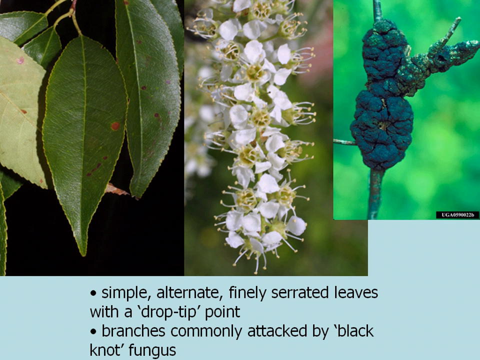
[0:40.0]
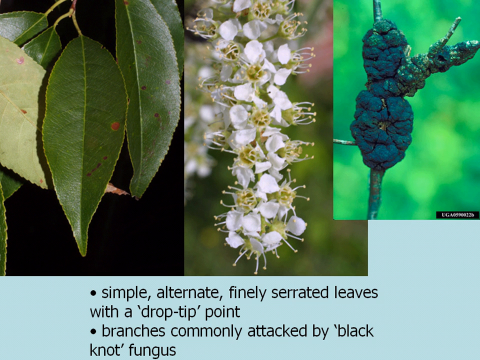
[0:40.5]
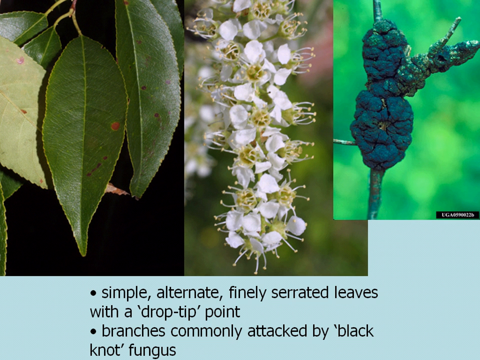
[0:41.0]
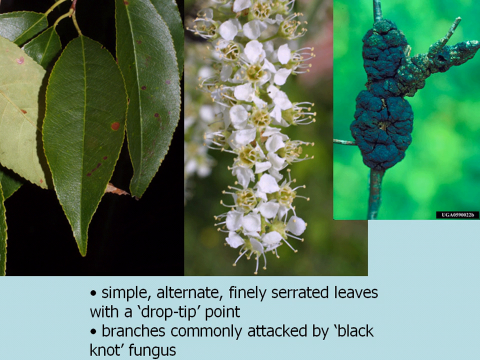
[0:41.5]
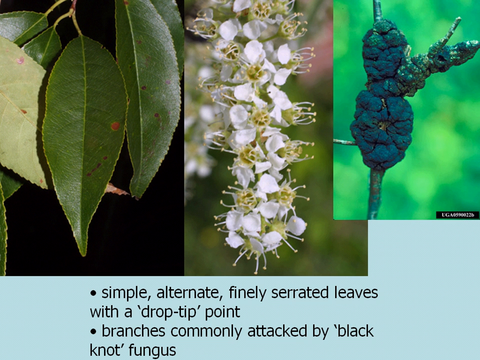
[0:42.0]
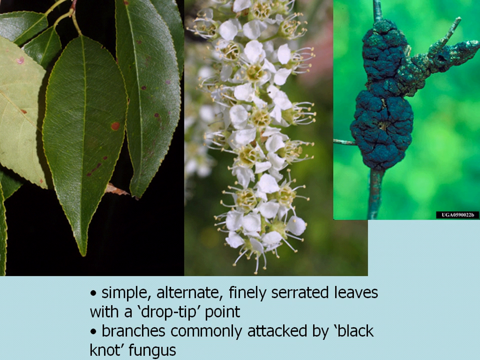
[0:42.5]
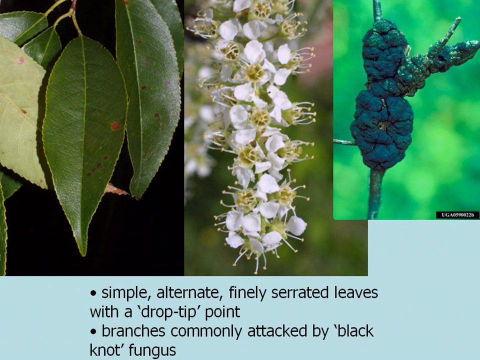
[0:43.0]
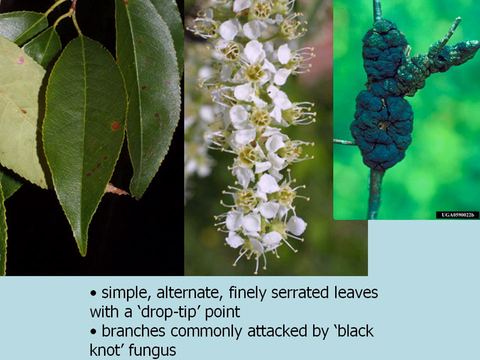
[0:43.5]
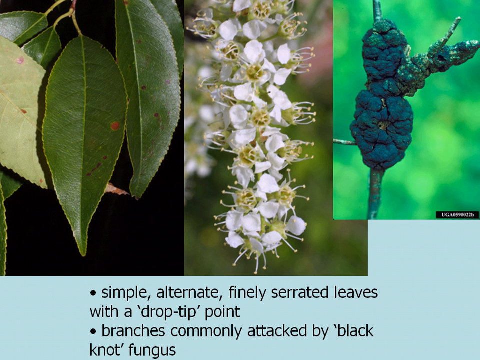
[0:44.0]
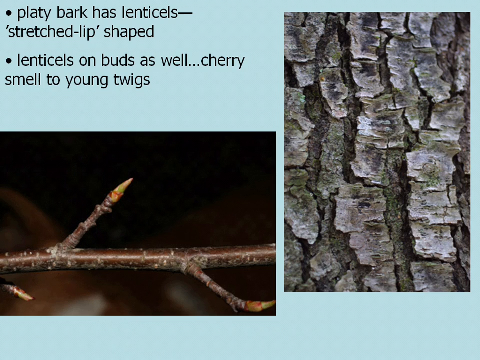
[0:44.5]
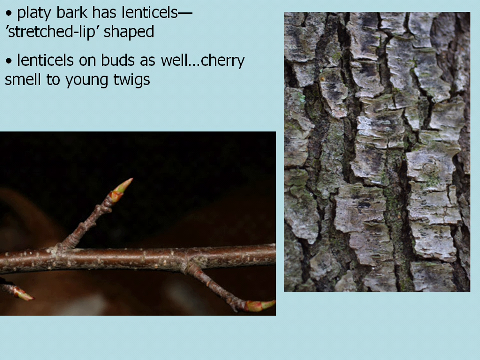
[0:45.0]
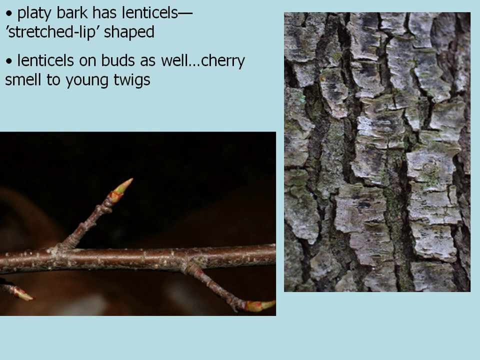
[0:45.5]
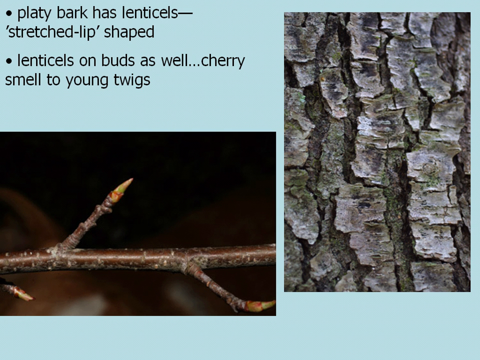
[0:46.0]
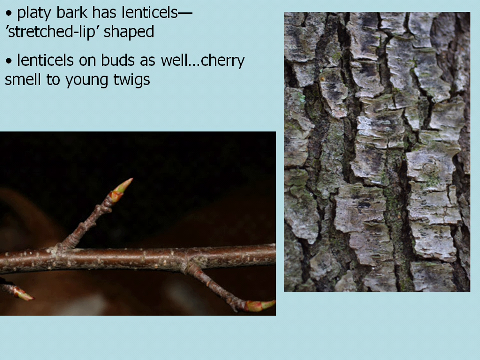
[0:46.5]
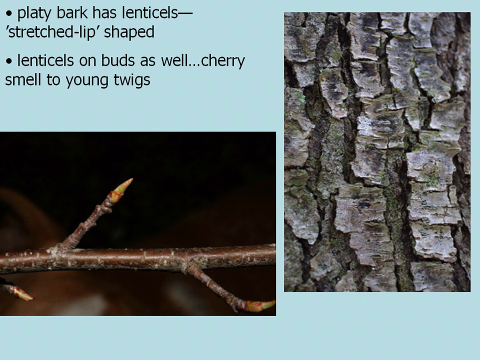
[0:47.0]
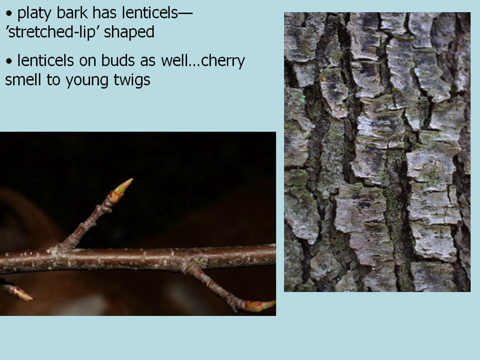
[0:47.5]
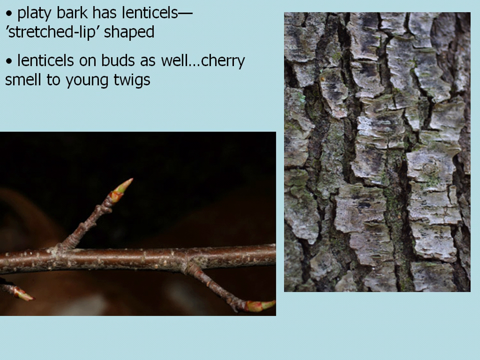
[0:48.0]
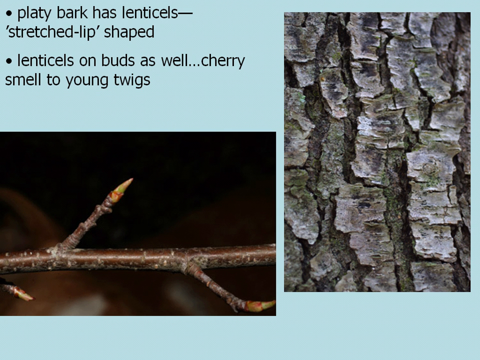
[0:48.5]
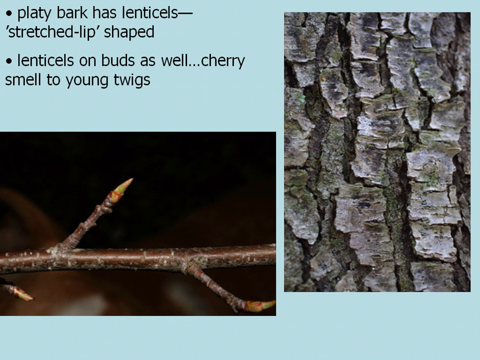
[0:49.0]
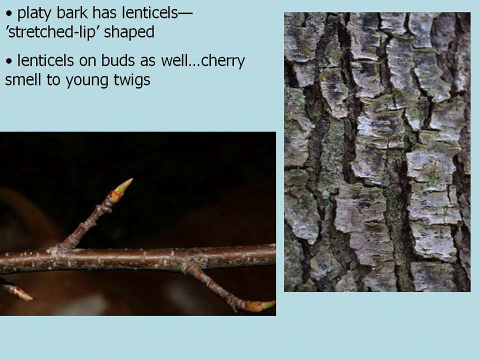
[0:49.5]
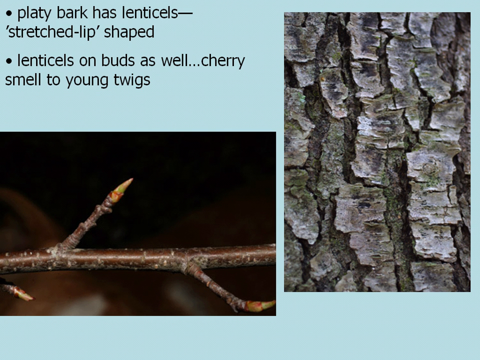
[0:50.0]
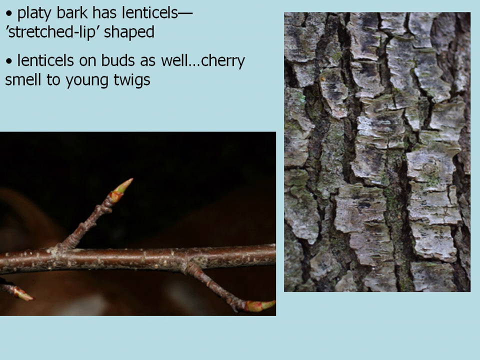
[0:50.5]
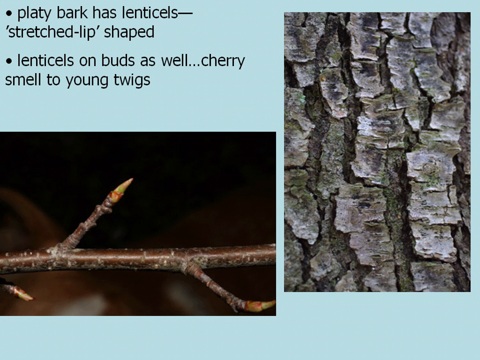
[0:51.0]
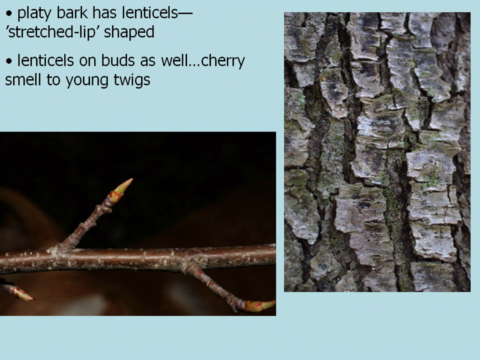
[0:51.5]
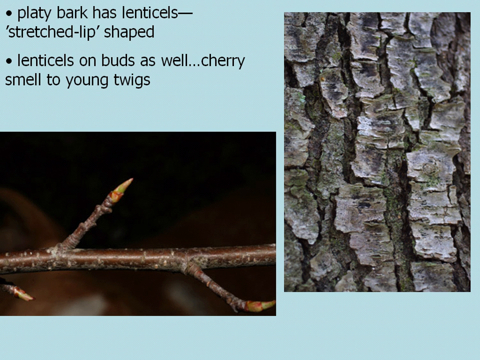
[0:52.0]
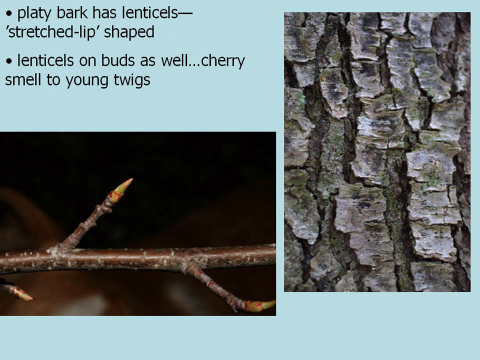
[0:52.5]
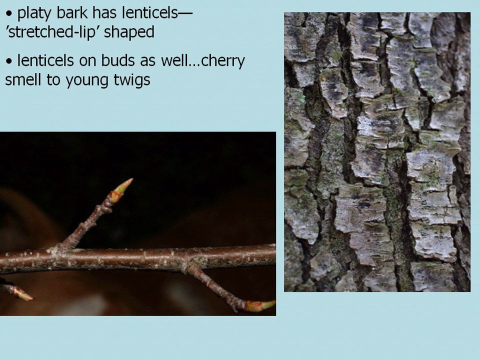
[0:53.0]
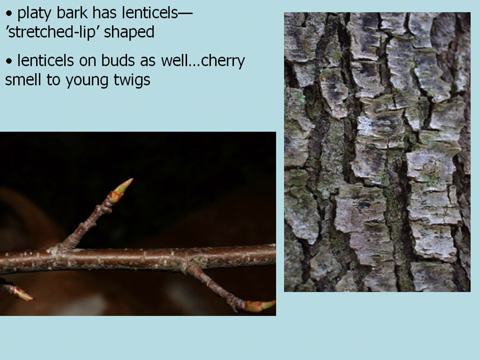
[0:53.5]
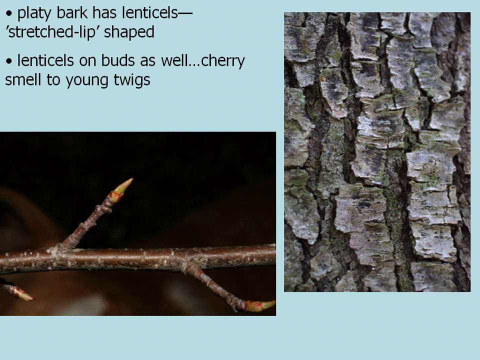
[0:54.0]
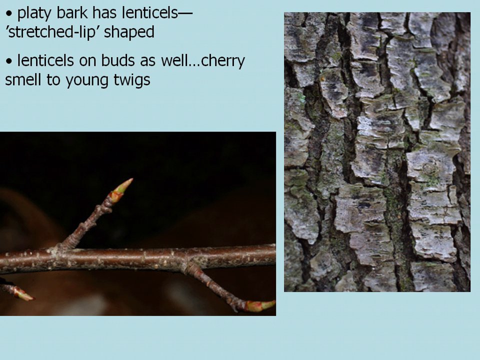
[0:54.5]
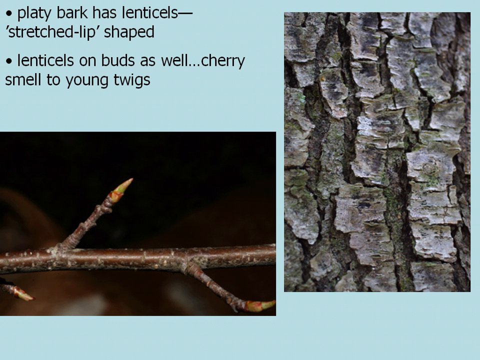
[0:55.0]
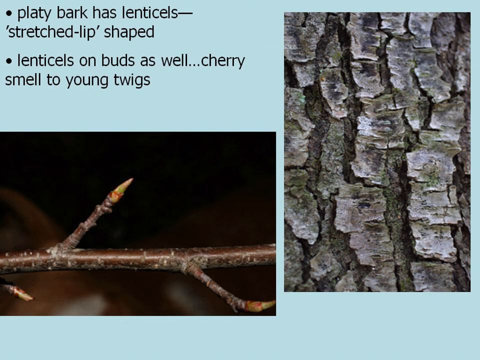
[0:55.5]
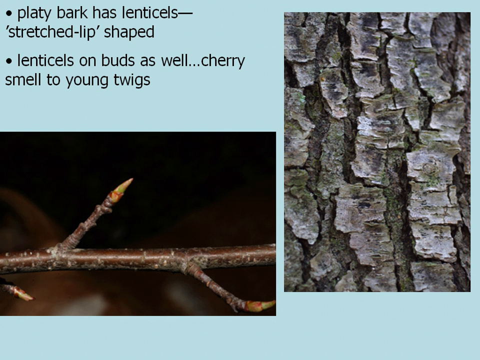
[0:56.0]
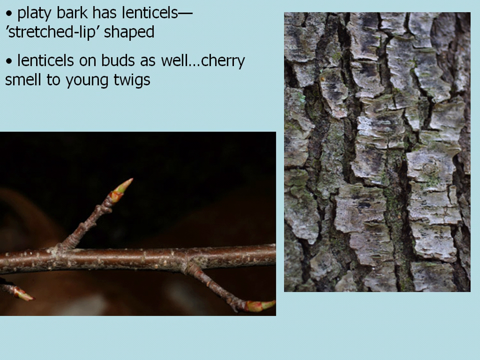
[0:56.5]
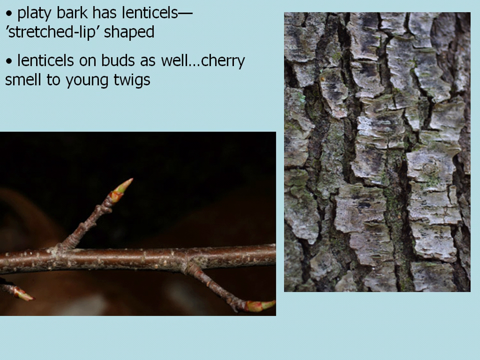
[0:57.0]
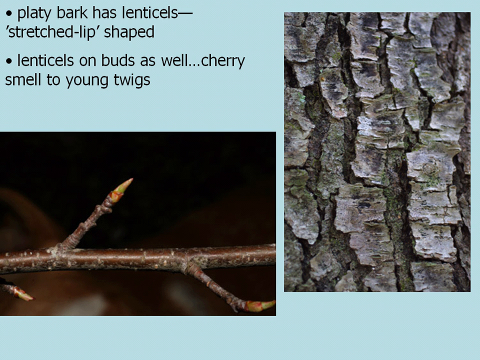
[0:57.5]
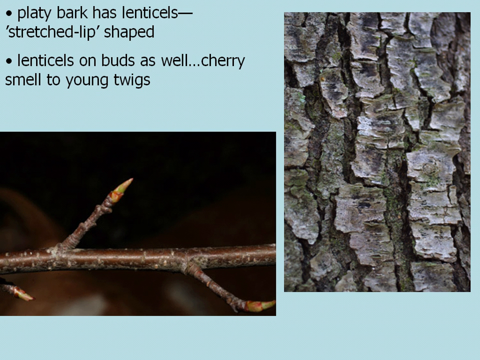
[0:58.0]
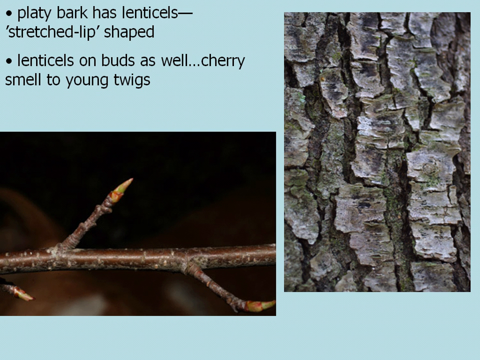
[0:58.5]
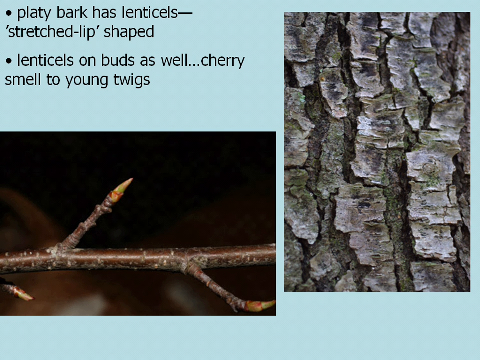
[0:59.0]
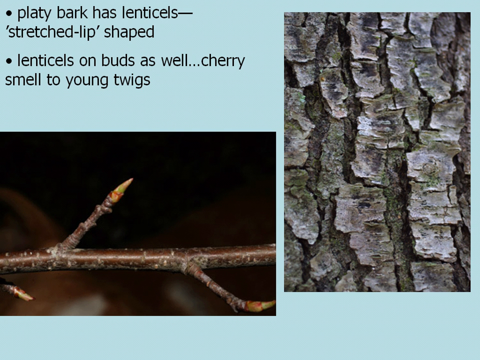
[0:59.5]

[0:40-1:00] The three pictures are still shown and the background is still blue. The text moves from the bottom to the upper left, and the three pictures disappear. Now there is one picture on the right and one on the left, showing something that looks like a stick. The text reads "plated bark has lenticels stretched-lipped shape lenticels" and the second point reads "lenticels on buds as well cherry smell to young twigs." The picture on the right shows young twigs and the one on the left shows lenticels. Nothing else appears besides the two pictures and the two bullet points.